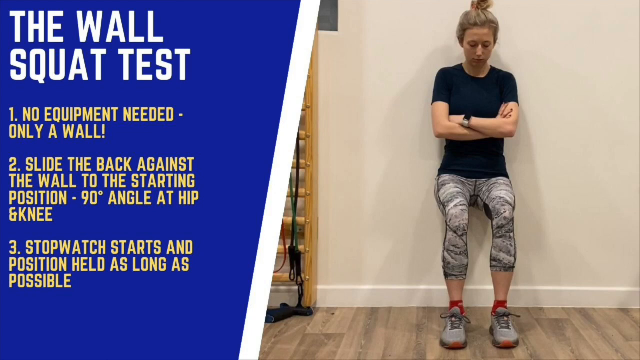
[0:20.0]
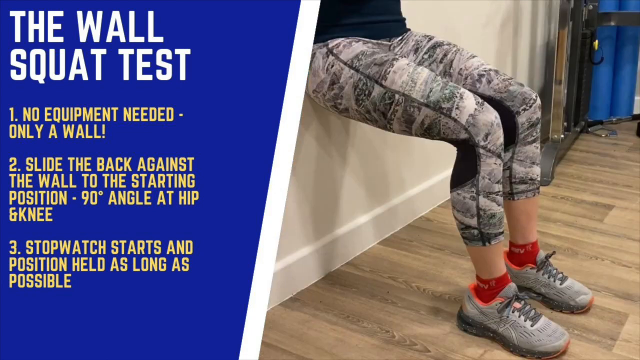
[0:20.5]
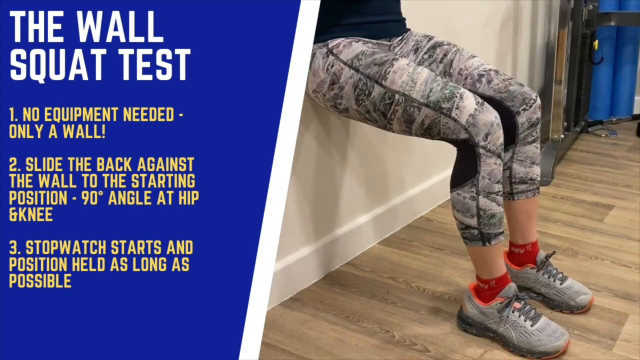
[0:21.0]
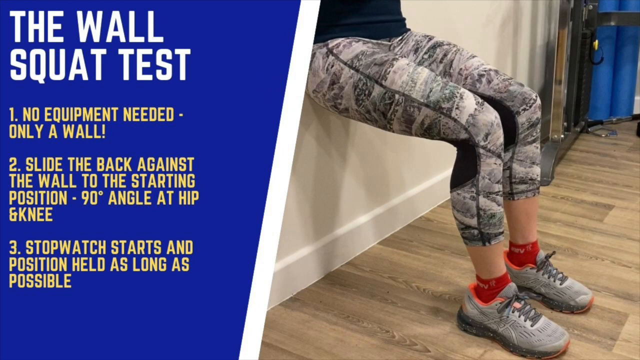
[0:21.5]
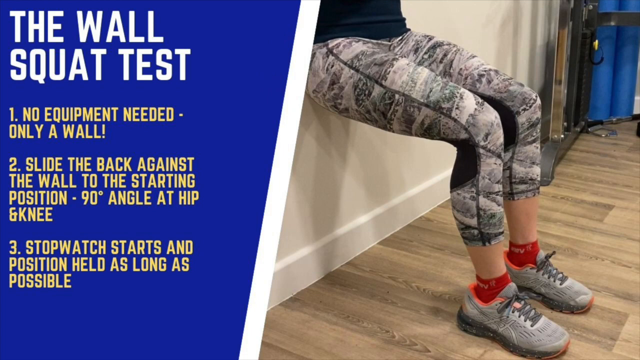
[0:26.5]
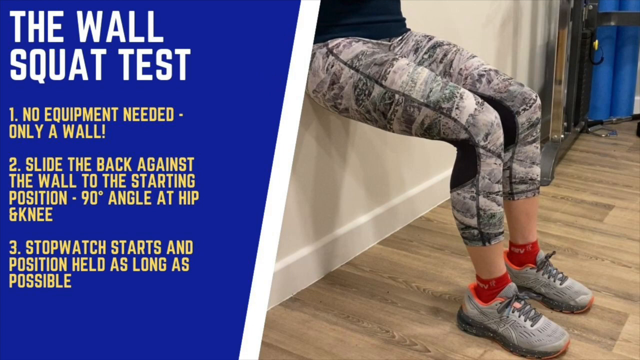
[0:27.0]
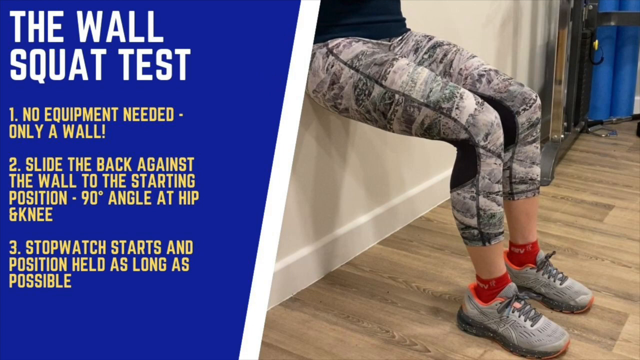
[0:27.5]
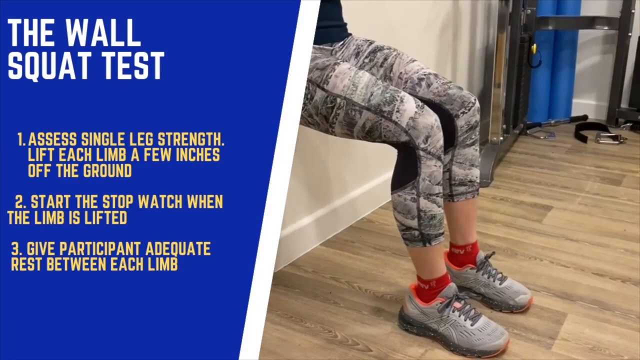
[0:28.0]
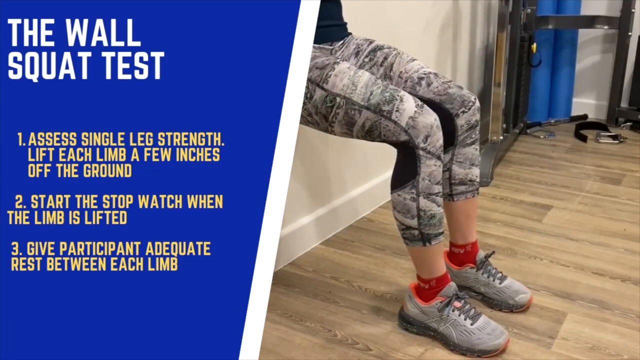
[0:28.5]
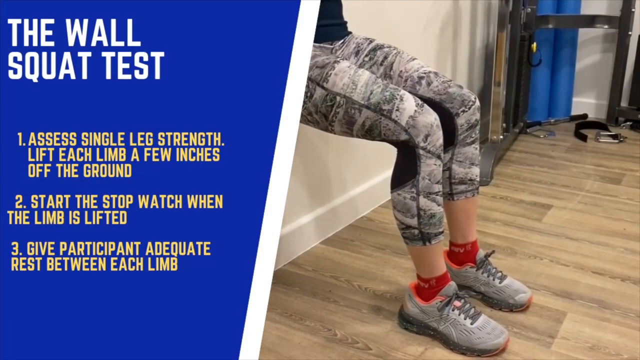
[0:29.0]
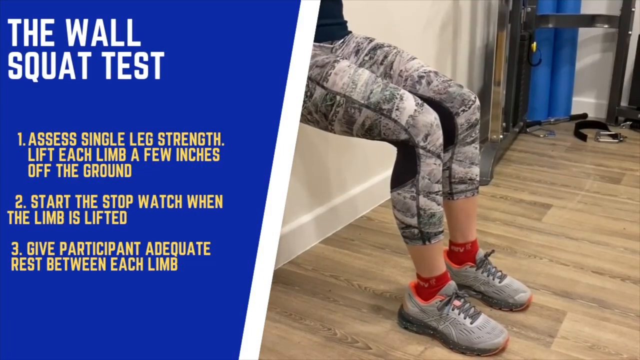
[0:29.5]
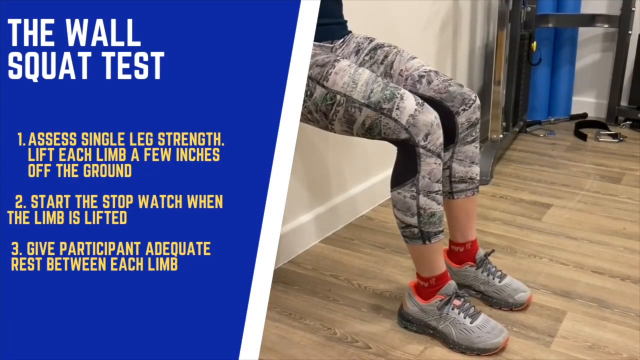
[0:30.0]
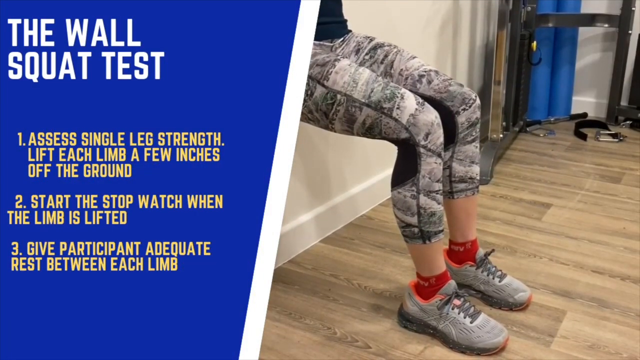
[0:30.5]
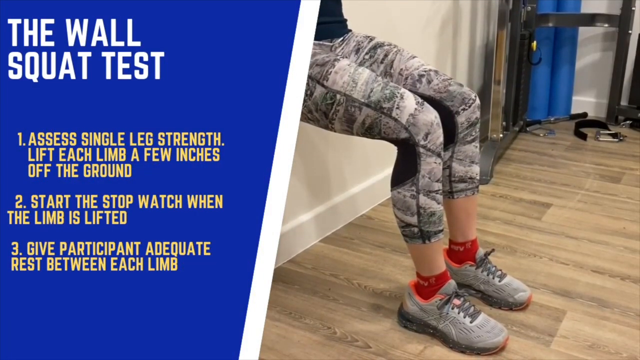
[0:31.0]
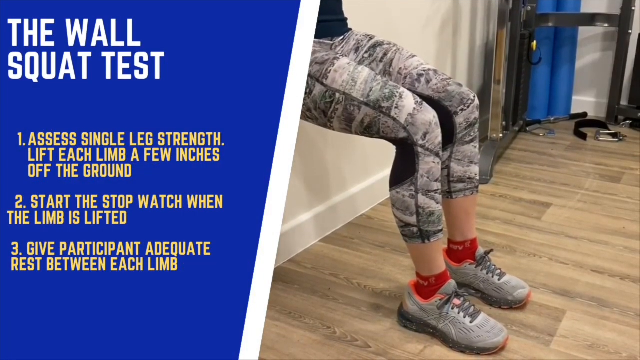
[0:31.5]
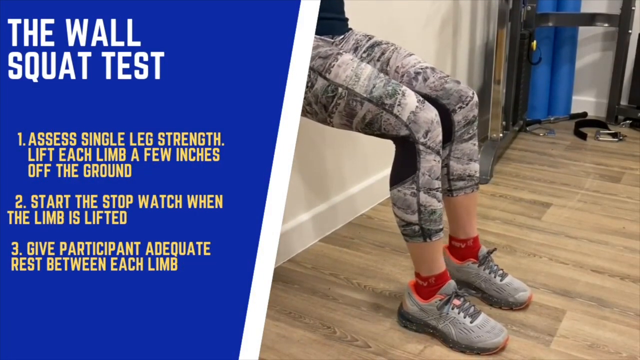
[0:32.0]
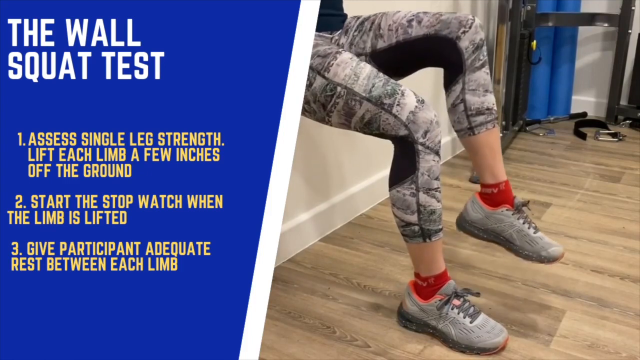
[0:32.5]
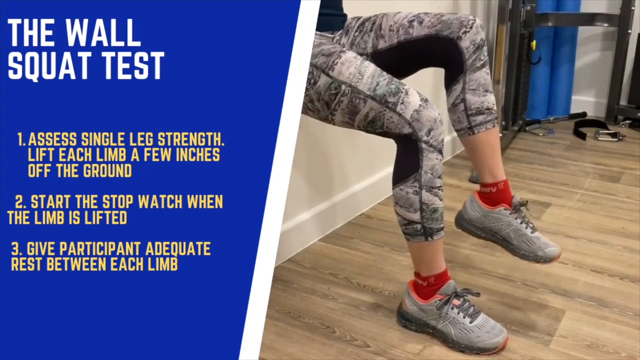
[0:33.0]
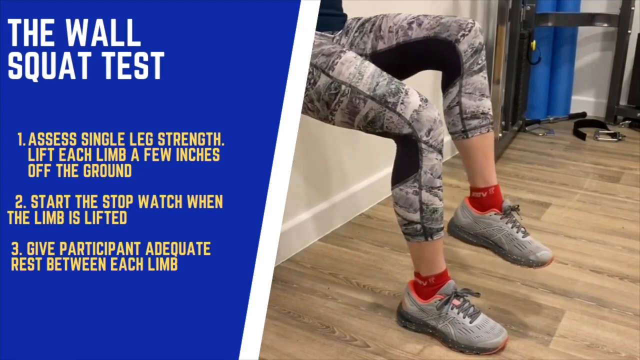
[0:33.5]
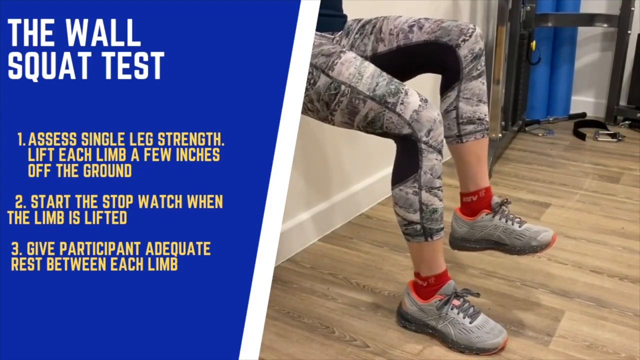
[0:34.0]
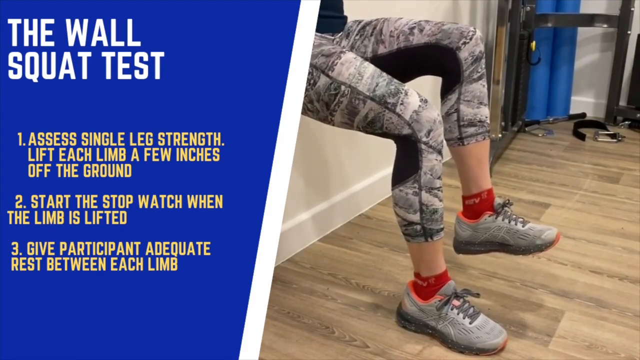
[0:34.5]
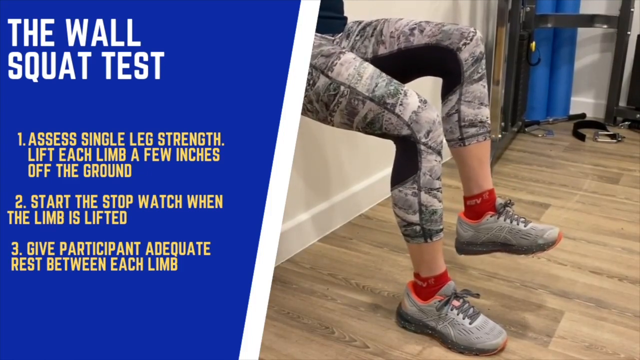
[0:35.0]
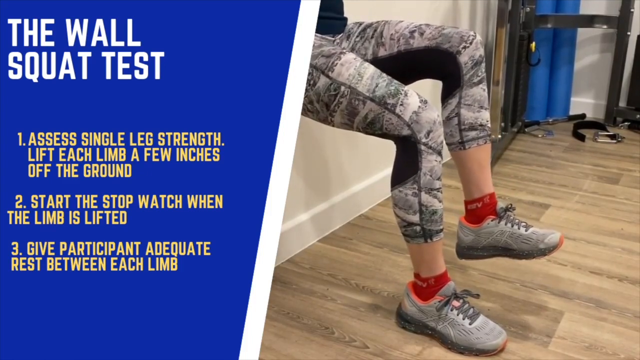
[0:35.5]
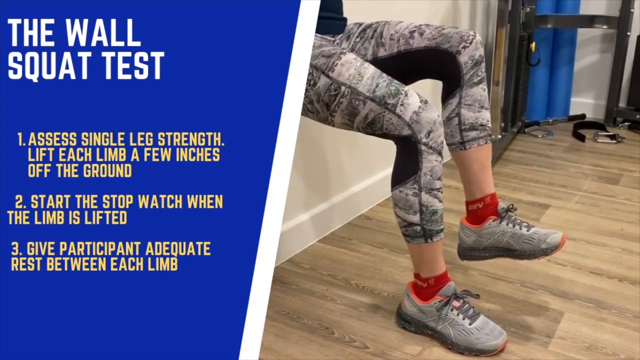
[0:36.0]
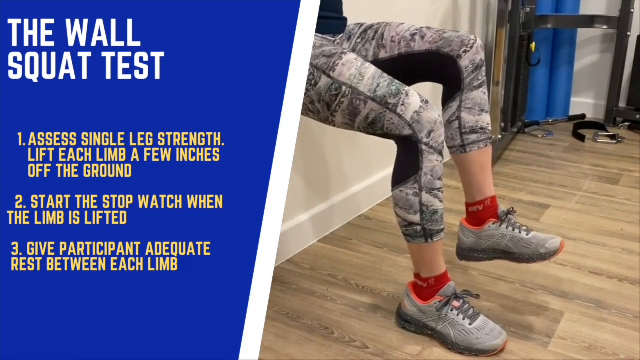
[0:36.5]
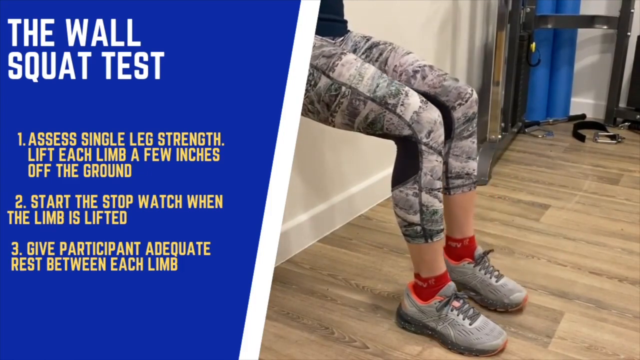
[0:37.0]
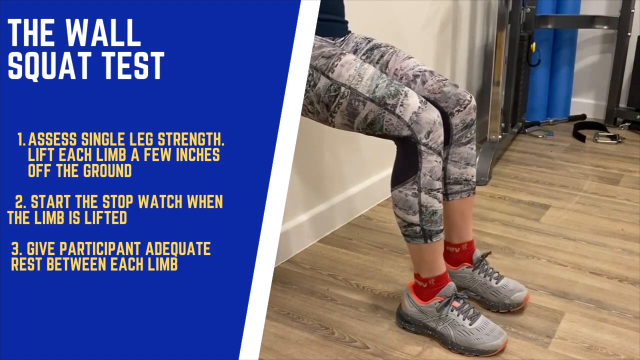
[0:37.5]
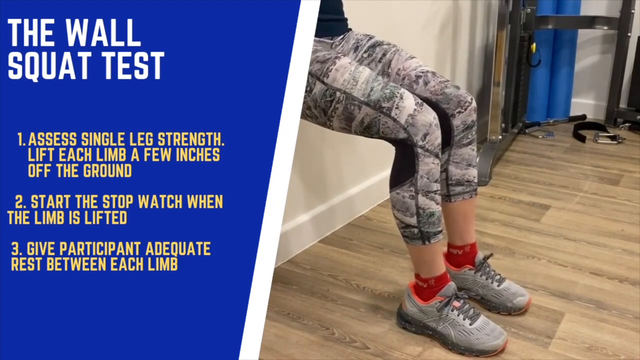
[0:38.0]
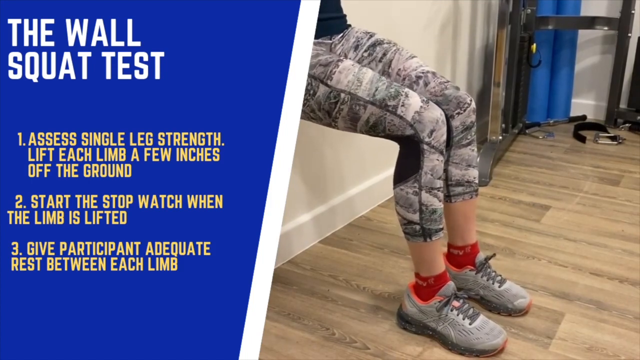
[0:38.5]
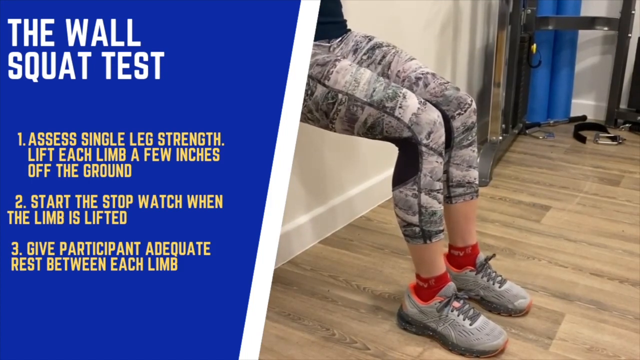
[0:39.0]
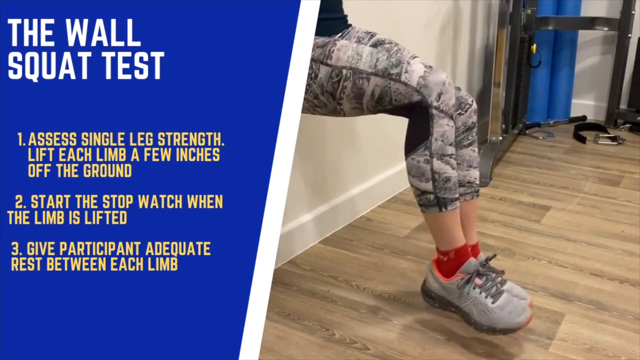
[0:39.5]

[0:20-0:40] The same picture of the woman squatting appears; she wears a short-sleeved black shirt and her legs are bent. Next to her, white text reads "the wall squat test," and yellow text reads "no equipment needed - only a wall," then "2 slide the back against the wall to the starting position - 90 degree angle at the hip," and "3" followed by "starts and position held as long as possible." Her back leans against the wall and her arms are folded. The view zooms in on the posture of her legs, which appear to be at slightly more than a 90-degree angle, only a few degrees off. She then lifts one leg, which looks like her right leg but is actually the other leg since she is facing the screen, and holds it up so the bottom of that foot is at ankle level. She then does the same with the other leg.